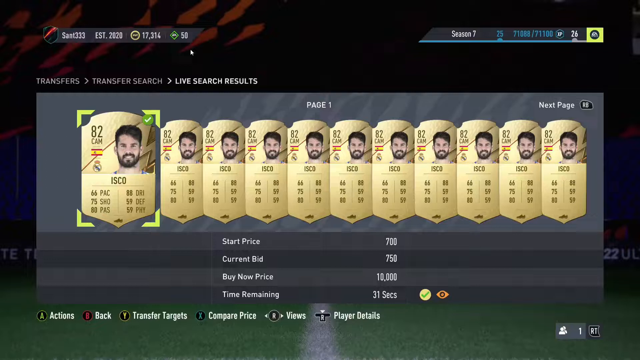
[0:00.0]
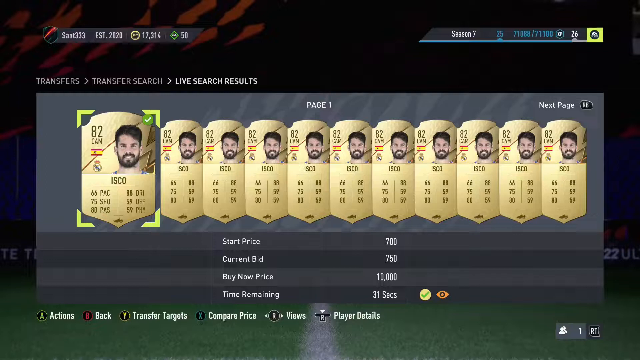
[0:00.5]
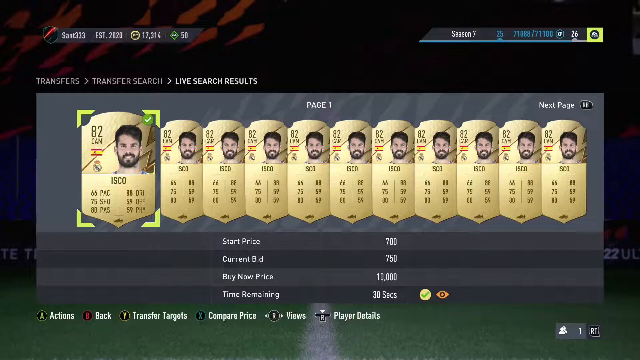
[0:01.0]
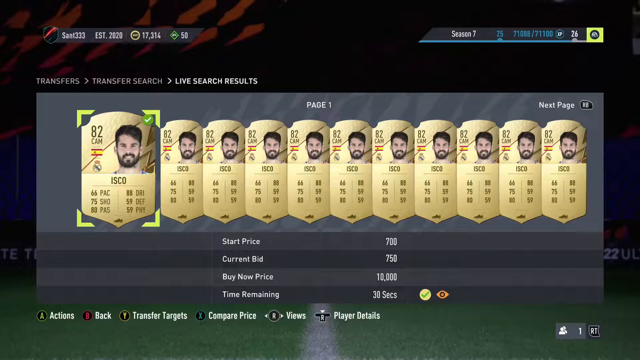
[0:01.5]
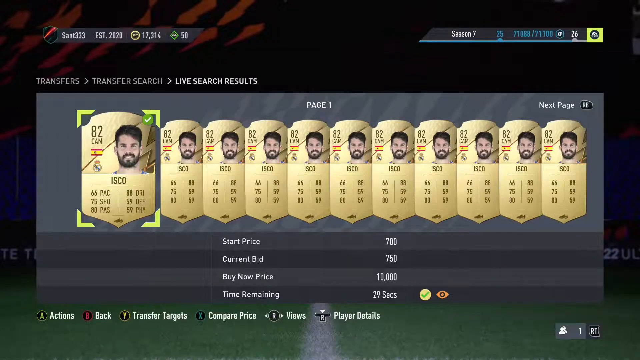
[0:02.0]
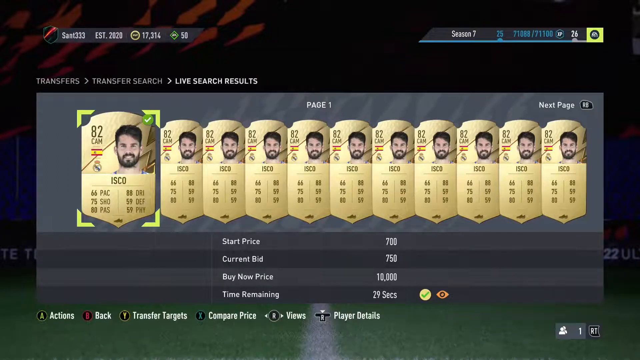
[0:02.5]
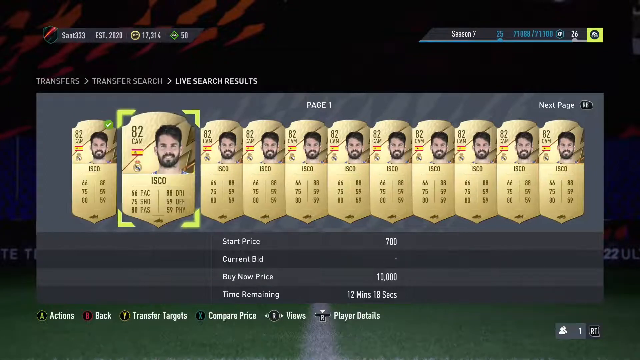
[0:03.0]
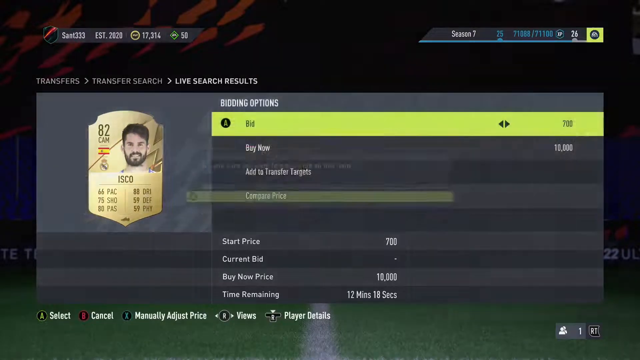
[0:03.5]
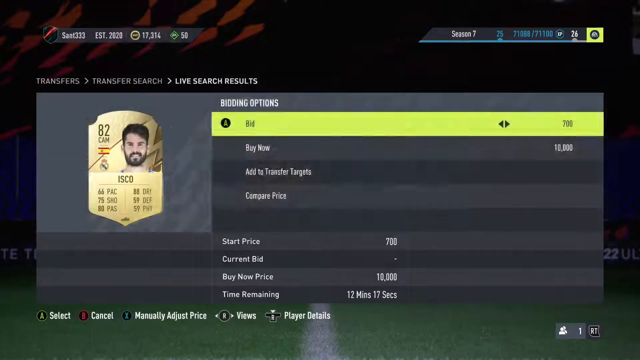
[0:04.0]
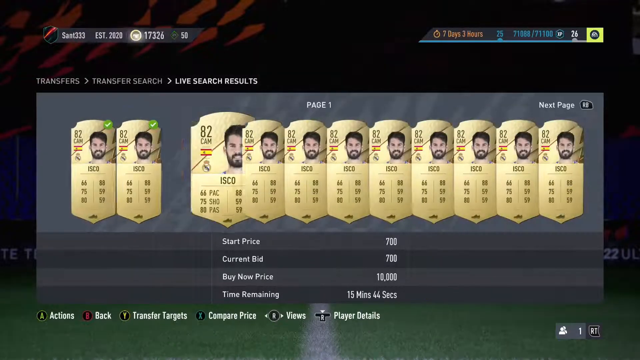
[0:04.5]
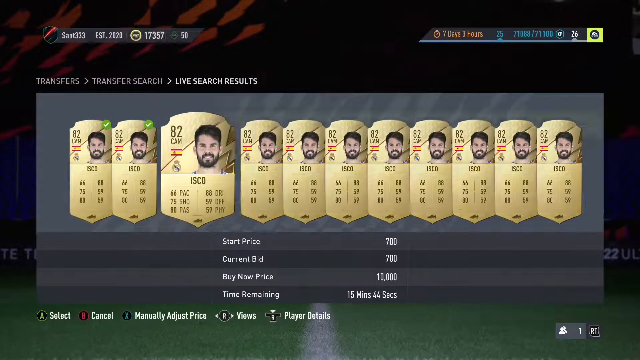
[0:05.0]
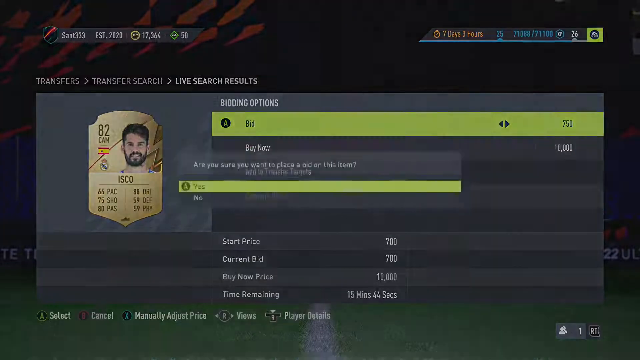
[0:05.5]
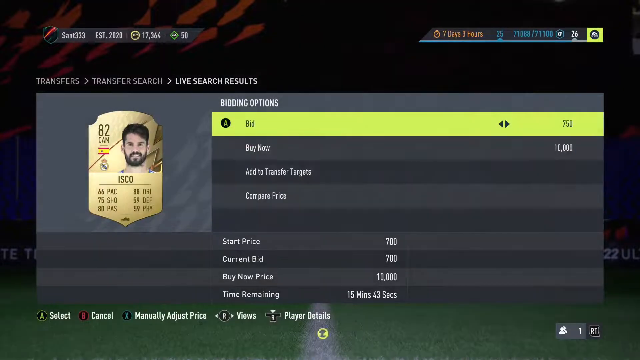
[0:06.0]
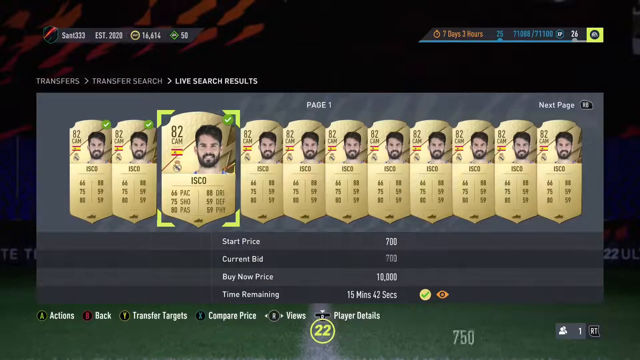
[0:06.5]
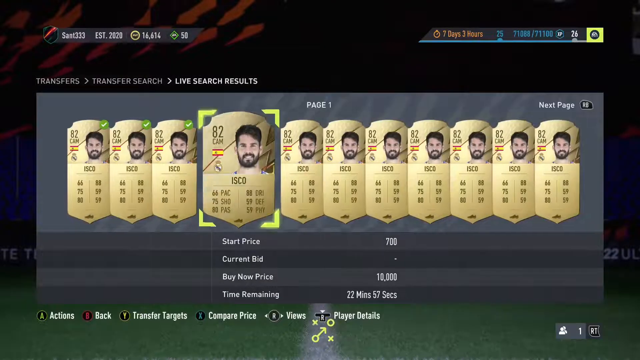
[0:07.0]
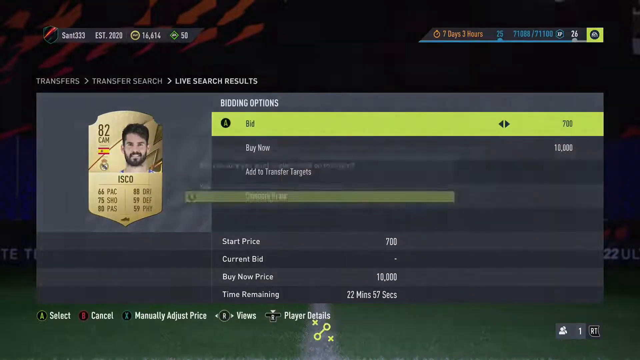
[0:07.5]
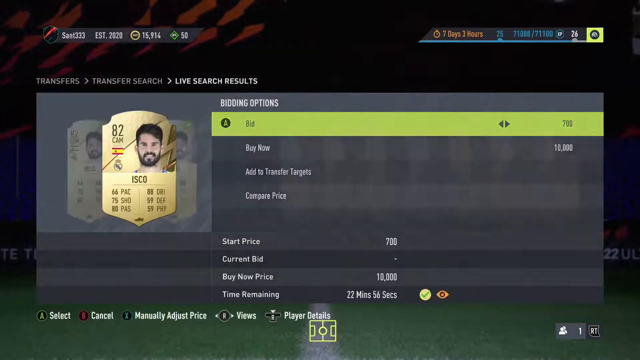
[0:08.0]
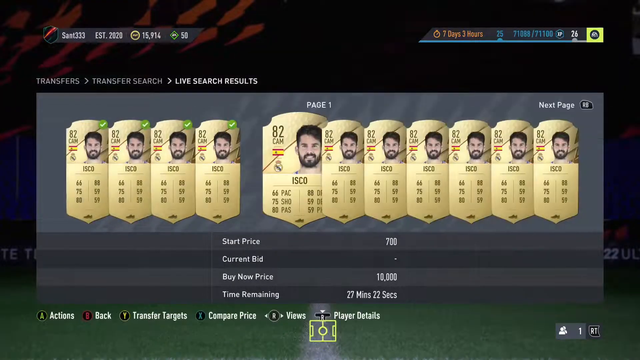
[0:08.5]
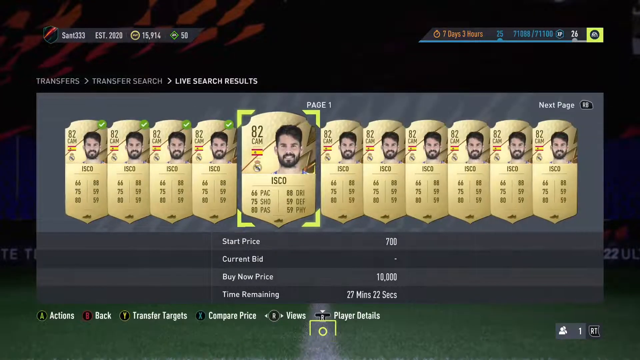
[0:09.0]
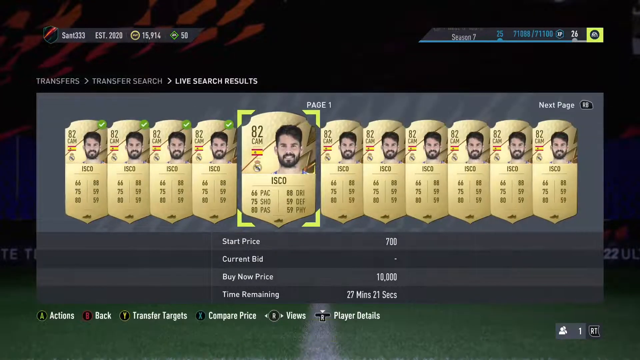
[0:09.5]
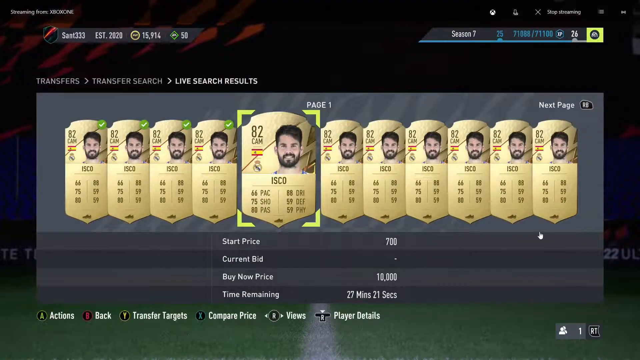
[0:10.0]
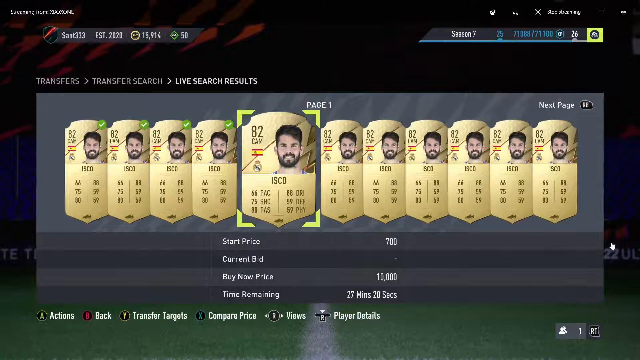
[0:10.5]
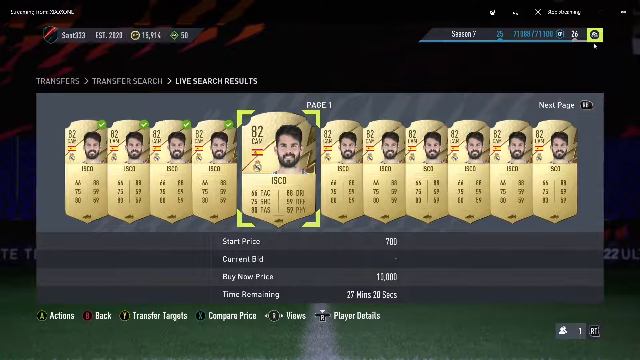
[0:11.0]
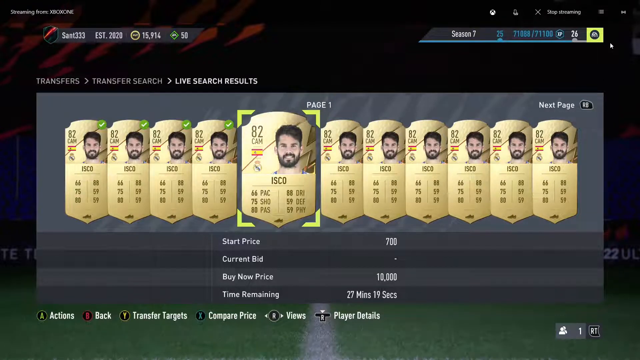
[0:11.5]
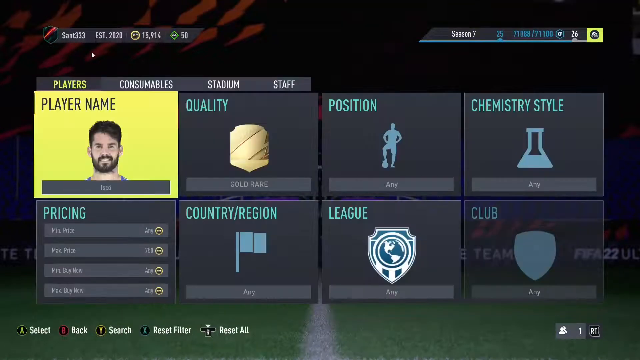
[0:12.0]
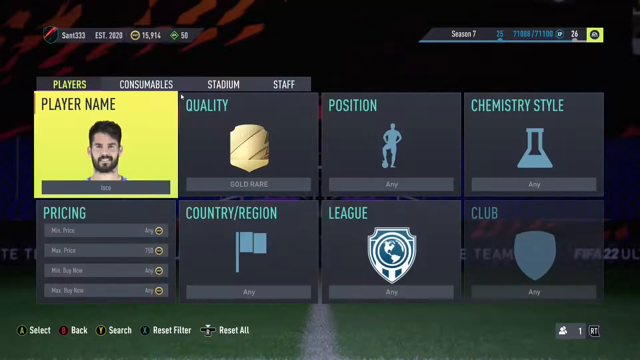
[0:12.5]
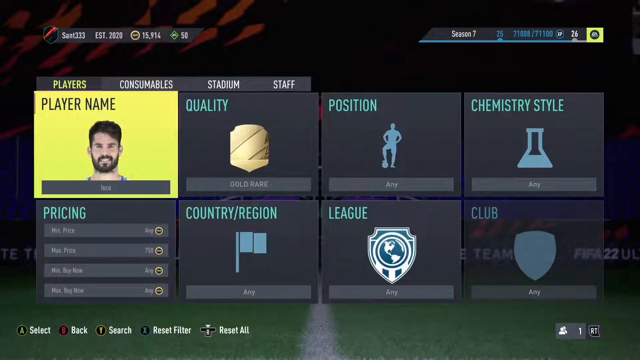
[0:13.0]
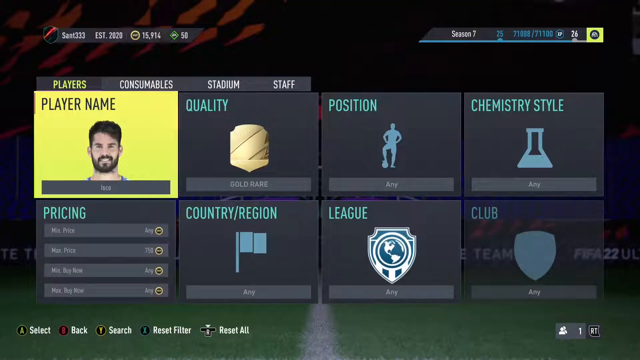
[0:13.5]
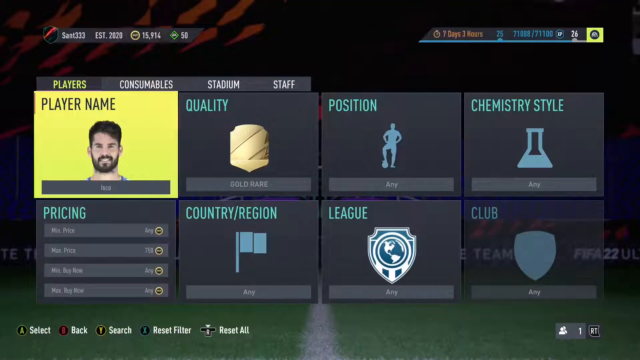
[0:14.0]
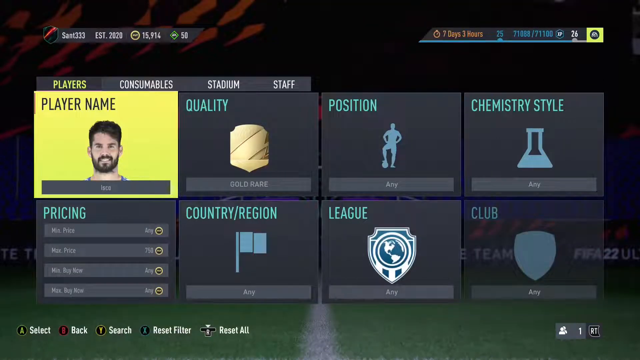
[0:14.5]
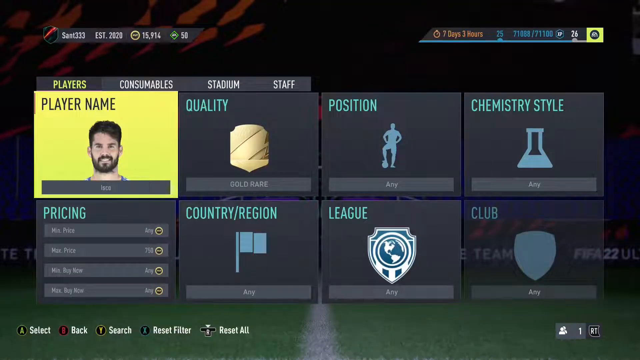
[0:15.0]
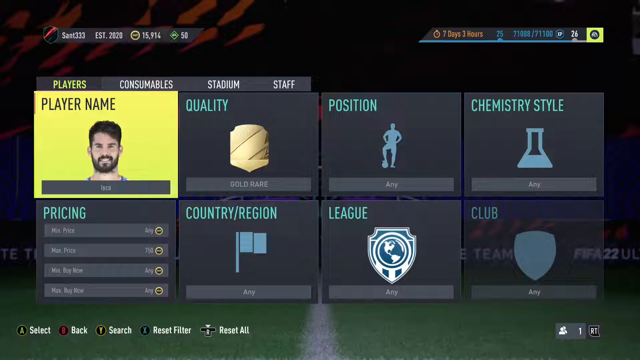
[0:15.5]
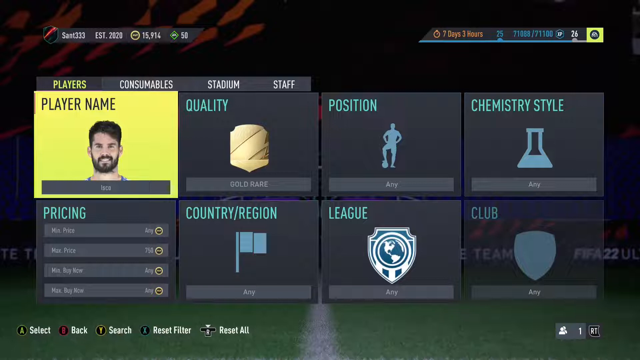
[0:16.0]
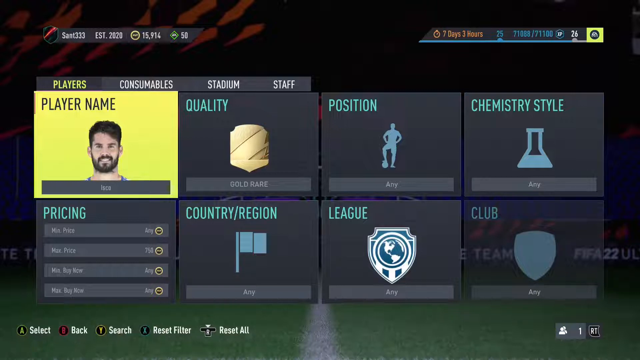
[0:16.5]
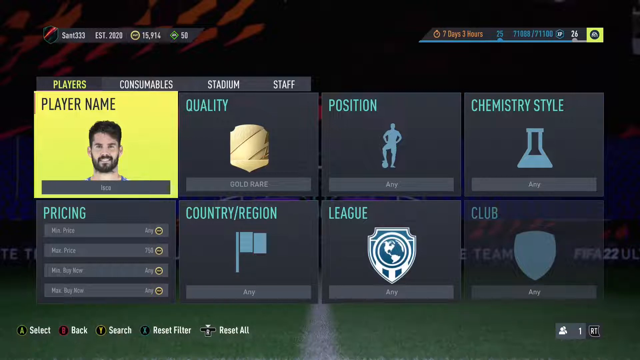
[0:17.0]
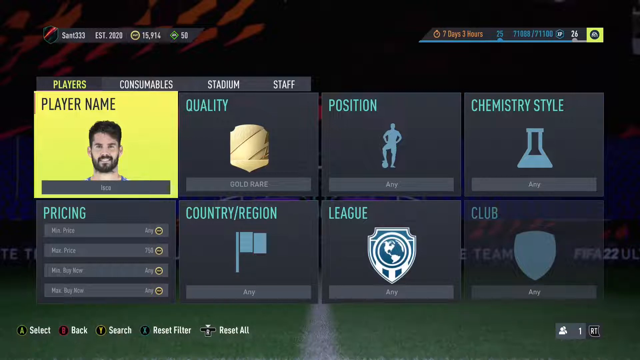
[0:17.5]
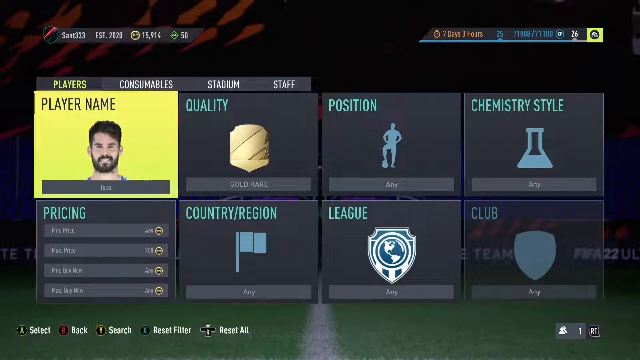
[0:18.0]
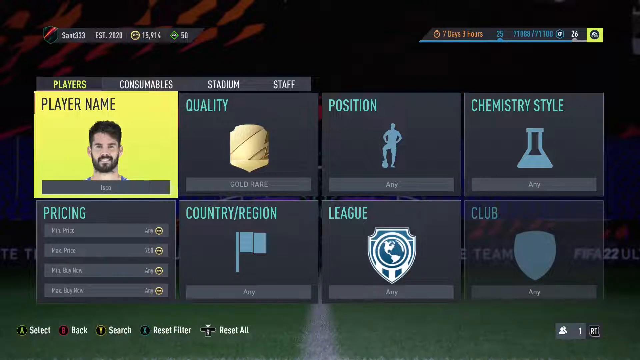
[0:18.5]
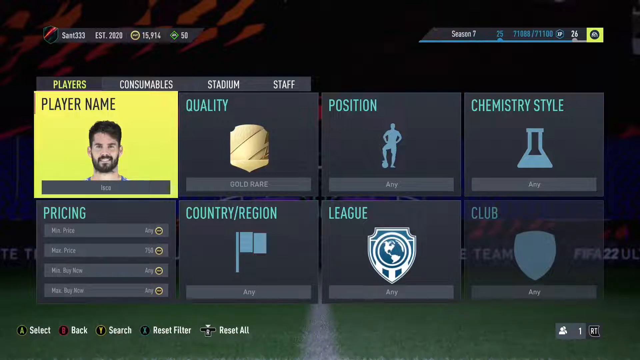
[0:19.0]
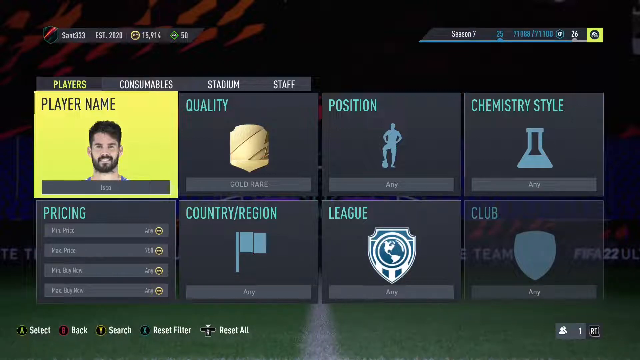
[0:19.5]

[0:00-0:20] What appears to be a card trading game is on screen. The player appears to be looking at a stack of cards showing a character or player. The cards are all identical; they all seem to show one player with the same stats, the same overall rating, and the same abilities, which are listed below the portrait on a gold emblem. The view transitions to a menu where the player appears to be bidding on cards. It has search filters for player name, quality, position, chemistry style, country/region, price, league, and club, and other submenus offer options for consumables, stadium, and staff. This seems to be a franchise mode or an ultimate team mode of a game, apparently a FIFA soccer game, judging by the silhouette over "position" of a soccer player with his foot on a soccer ball.